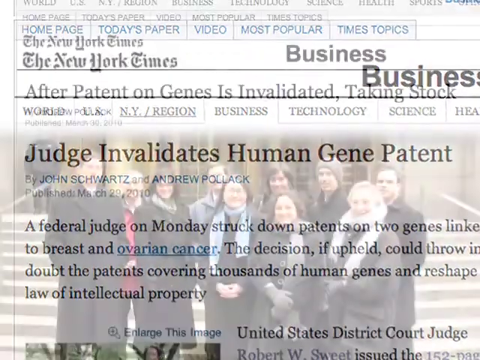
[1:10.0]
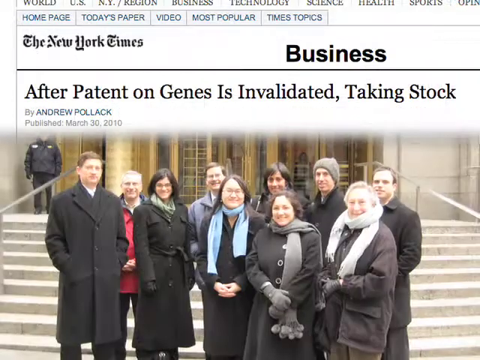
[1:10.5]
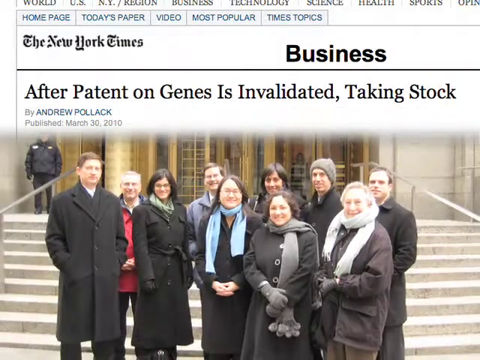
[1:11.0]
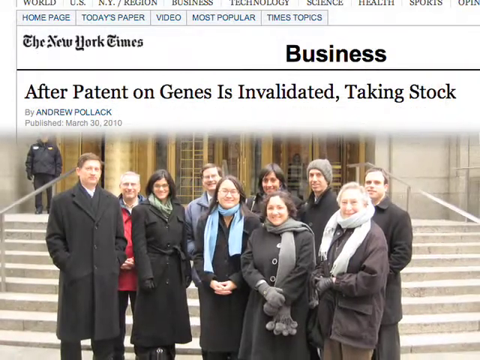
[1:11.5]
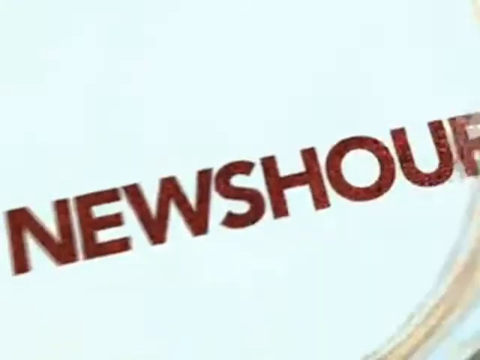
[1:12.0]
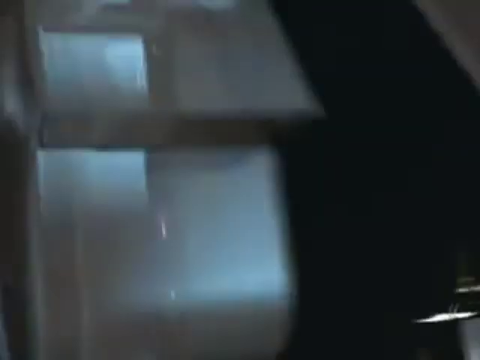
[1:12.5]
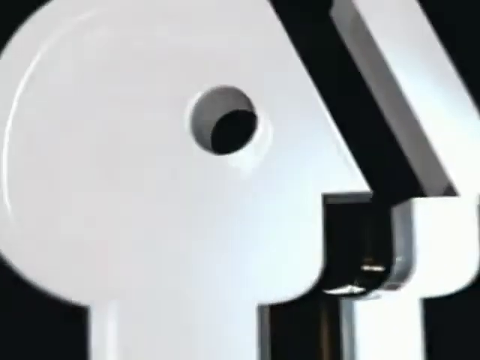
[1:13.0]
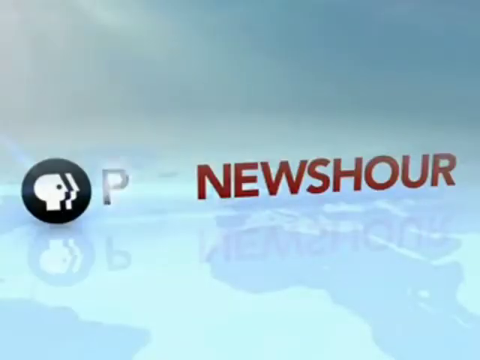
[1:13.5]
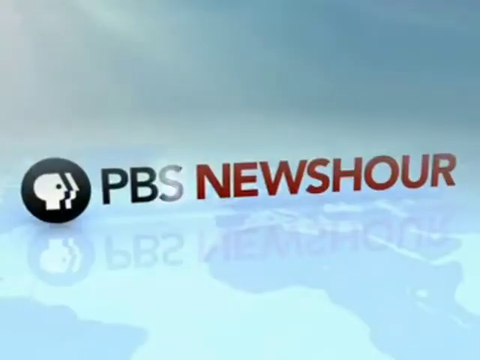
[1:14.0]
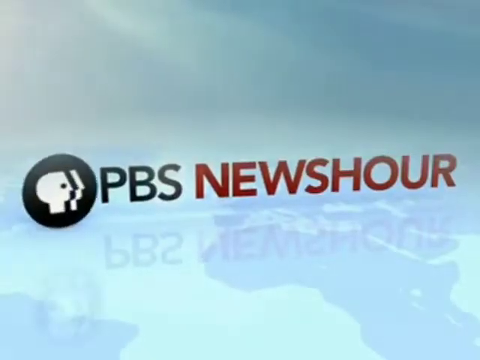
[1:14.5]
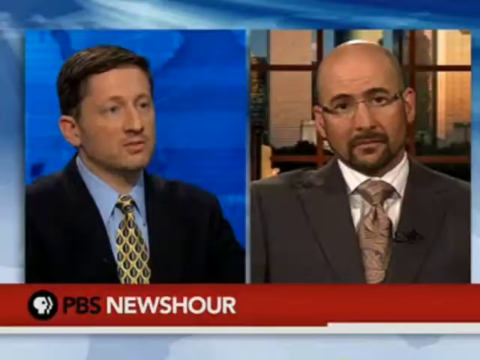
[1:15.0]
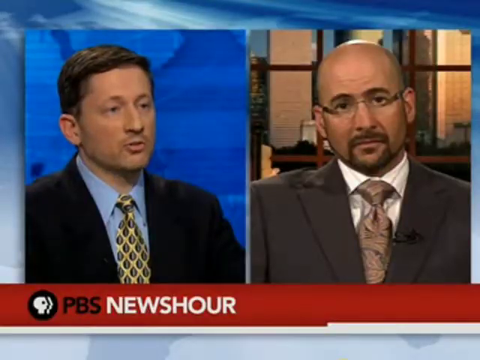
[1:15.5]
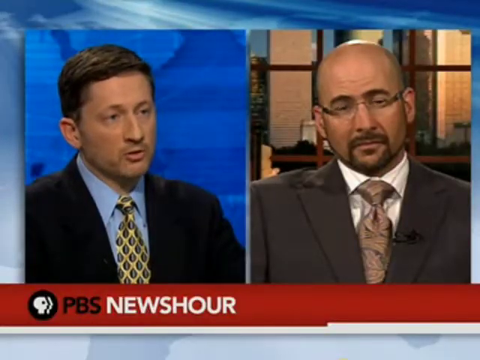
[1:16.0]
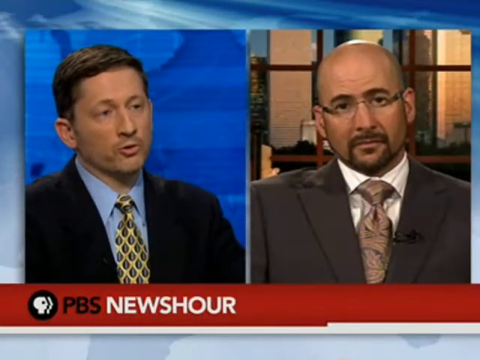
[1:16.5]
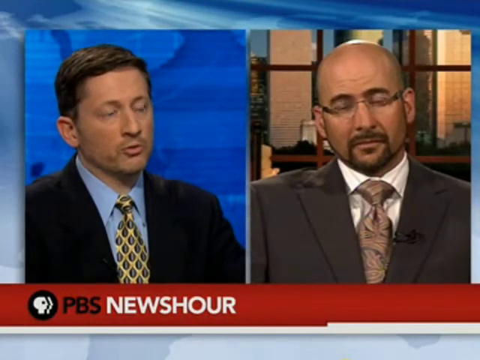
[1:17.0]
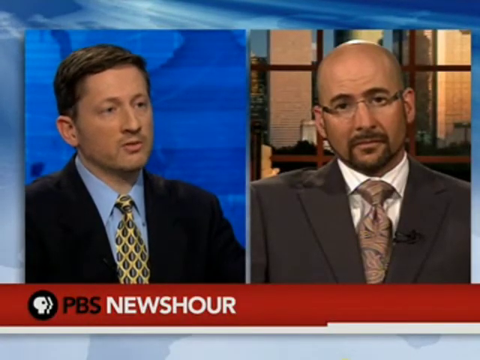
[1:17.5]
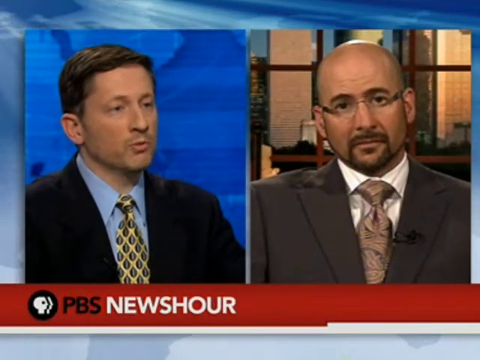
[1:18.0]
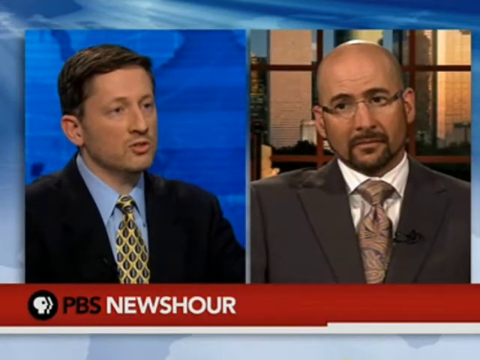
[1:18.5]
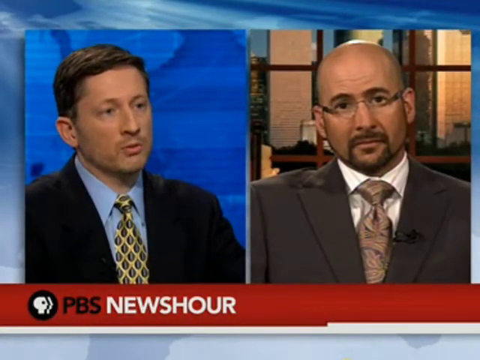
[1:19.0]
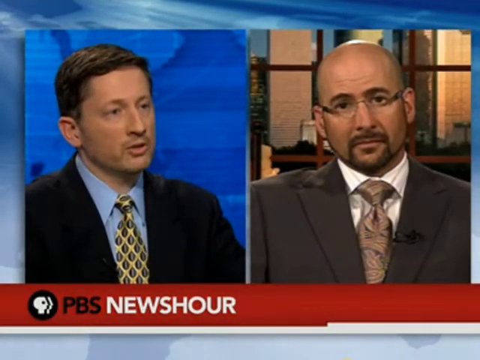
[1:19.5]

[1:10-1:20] A website is shown that looks to be the New York Times, as indicated in the upper left in its usual font in black letters. Above that is the site's navigation, and to the lower right of it, in bigger black letters, is the word "business." Below that on the left is the article title: "after patent on genes is invalidated taking stock." Below the title is a picture of maybe about 12 different people standing on a stairway. The video then cuts to a black screen, and the PBS logo rolls in: basically a face looking to the right, with an outline to the right doubling the right inch or so of the face, all on black. The logo then becomes very small and moves to the center left; after it, "PBS" appears in capital black letters, followed by "News Hour" in dark red capital letters.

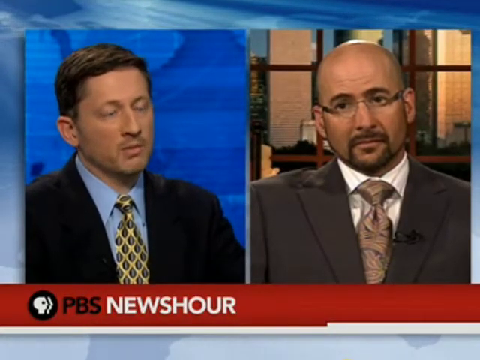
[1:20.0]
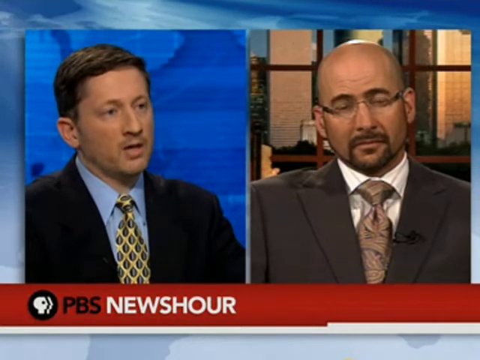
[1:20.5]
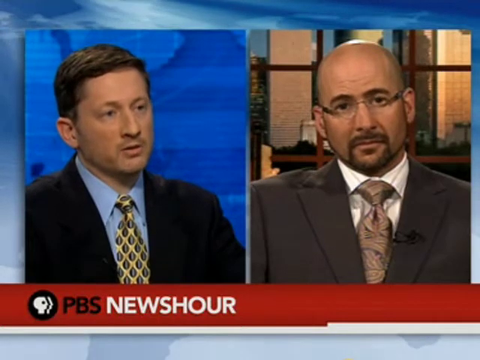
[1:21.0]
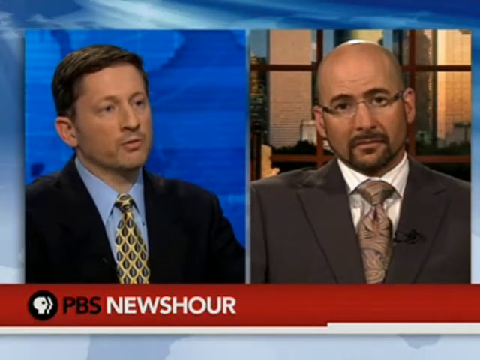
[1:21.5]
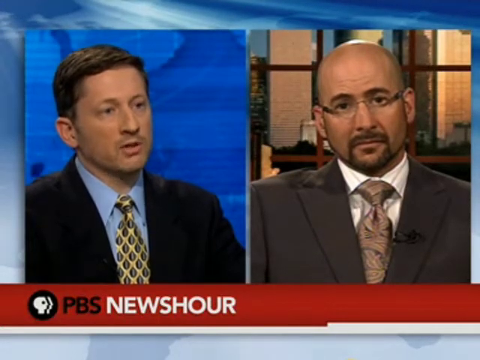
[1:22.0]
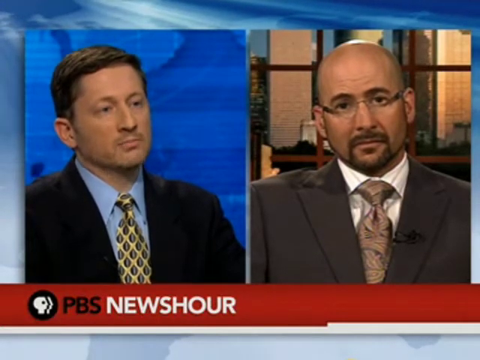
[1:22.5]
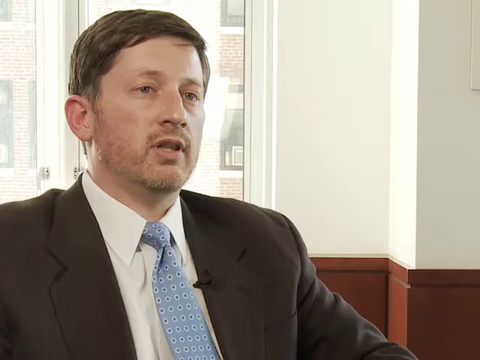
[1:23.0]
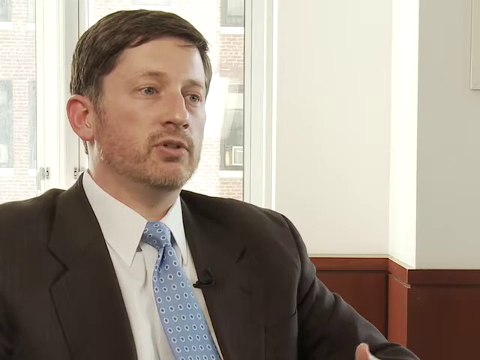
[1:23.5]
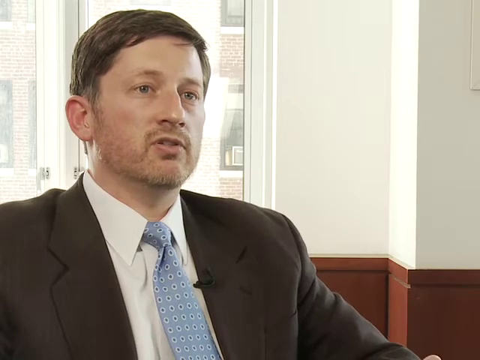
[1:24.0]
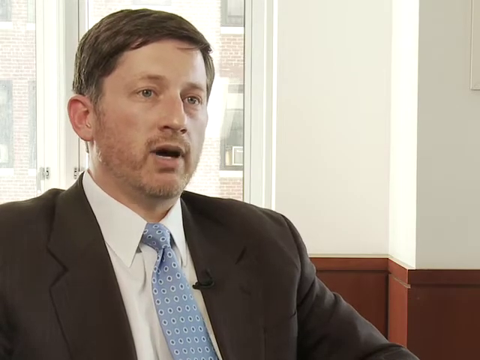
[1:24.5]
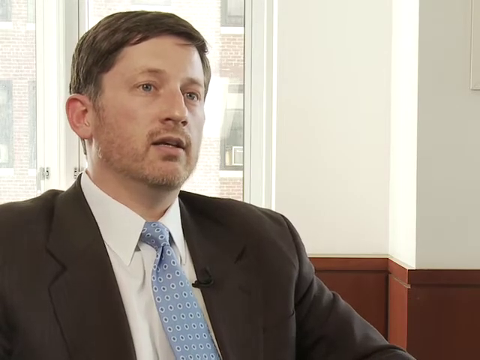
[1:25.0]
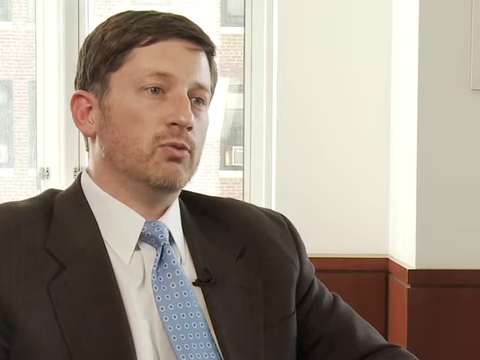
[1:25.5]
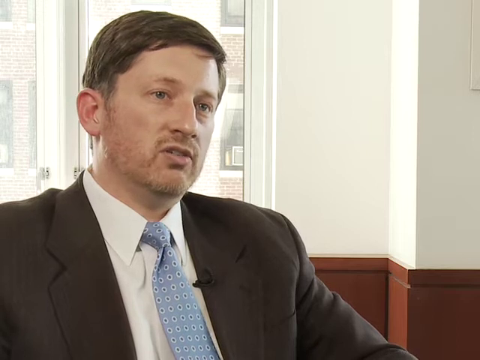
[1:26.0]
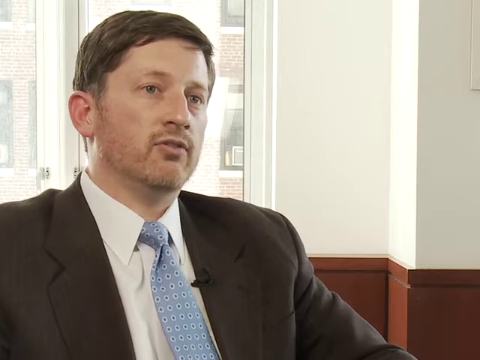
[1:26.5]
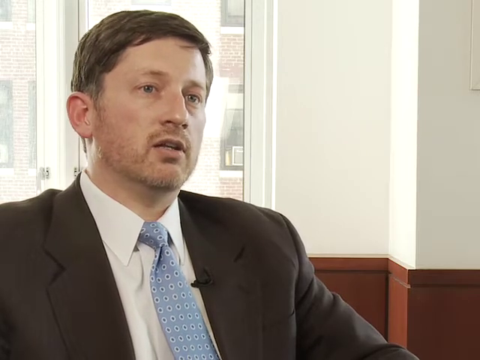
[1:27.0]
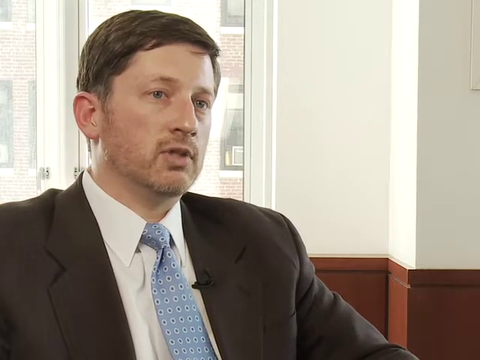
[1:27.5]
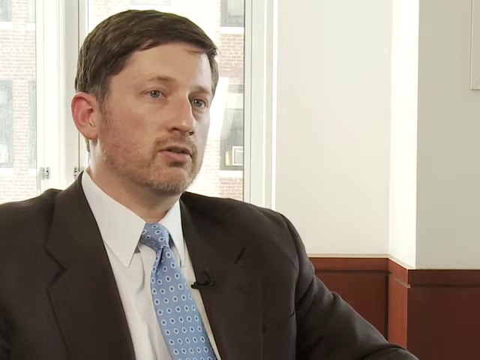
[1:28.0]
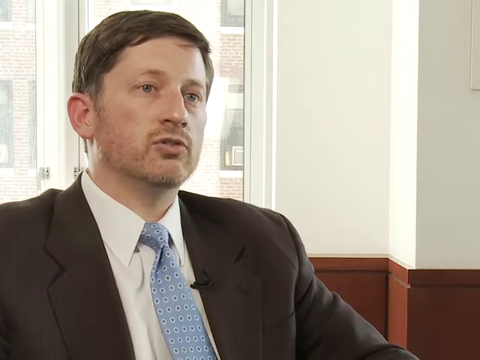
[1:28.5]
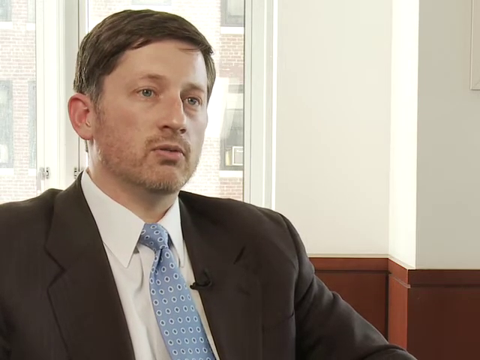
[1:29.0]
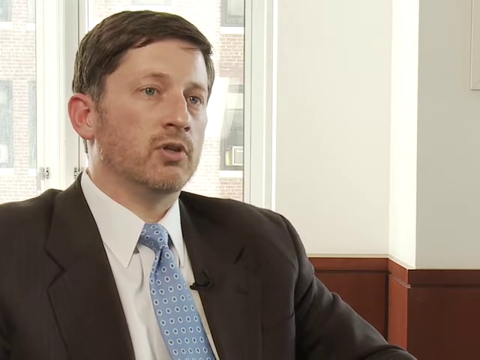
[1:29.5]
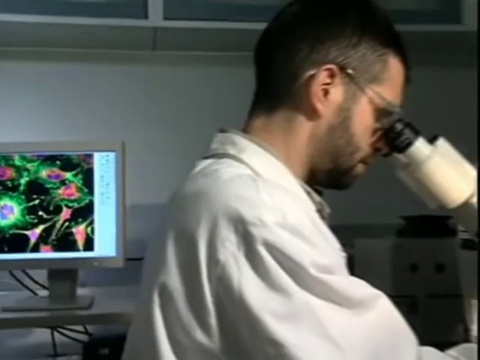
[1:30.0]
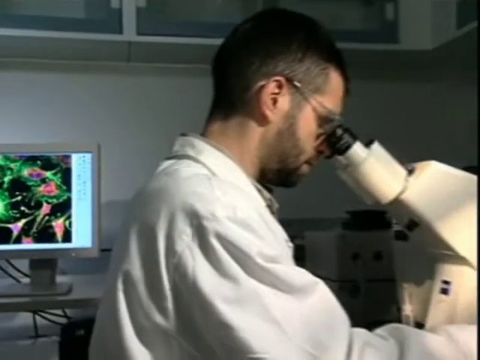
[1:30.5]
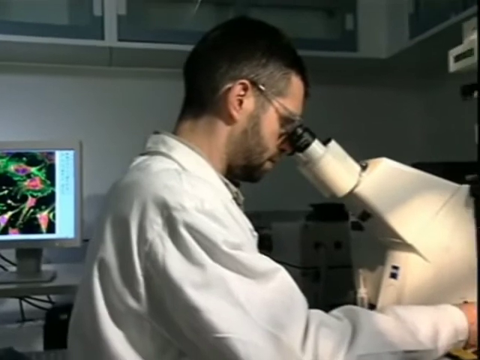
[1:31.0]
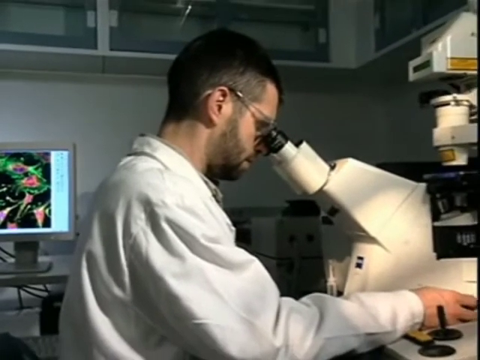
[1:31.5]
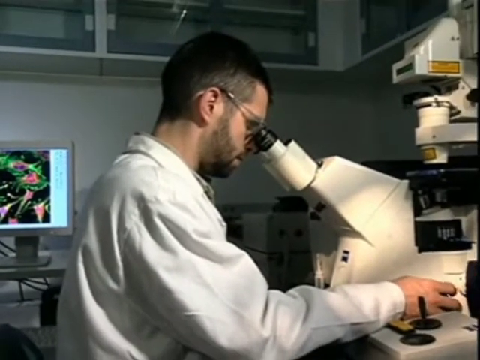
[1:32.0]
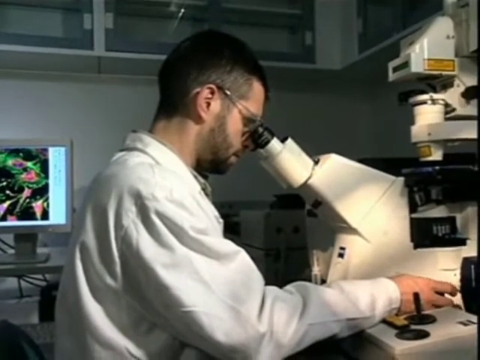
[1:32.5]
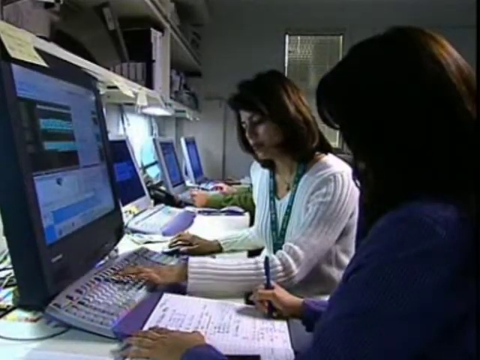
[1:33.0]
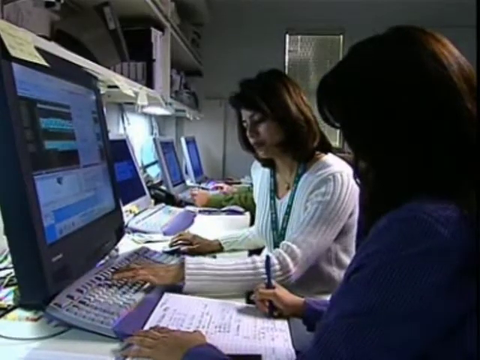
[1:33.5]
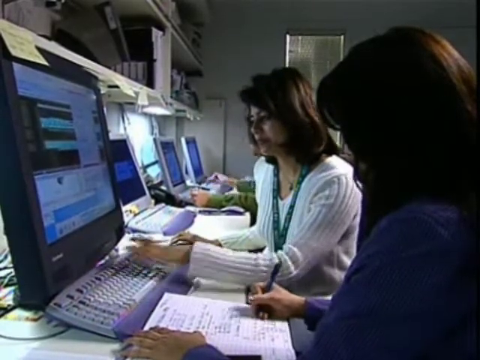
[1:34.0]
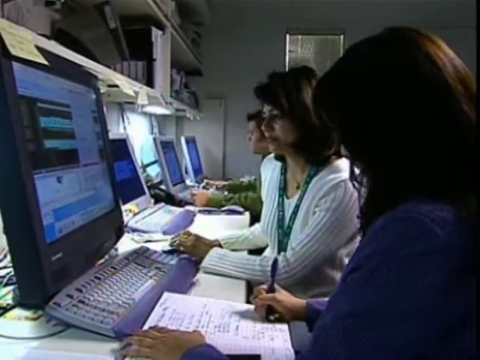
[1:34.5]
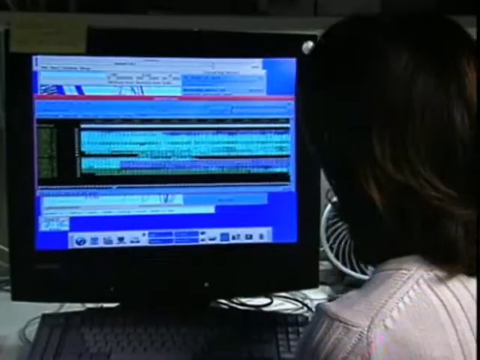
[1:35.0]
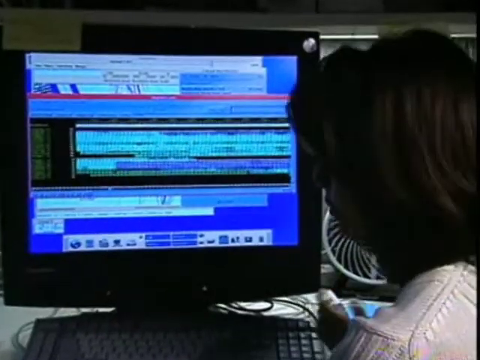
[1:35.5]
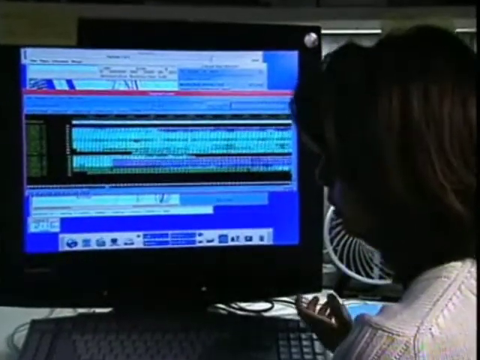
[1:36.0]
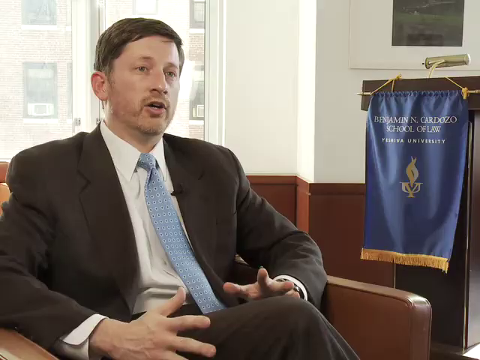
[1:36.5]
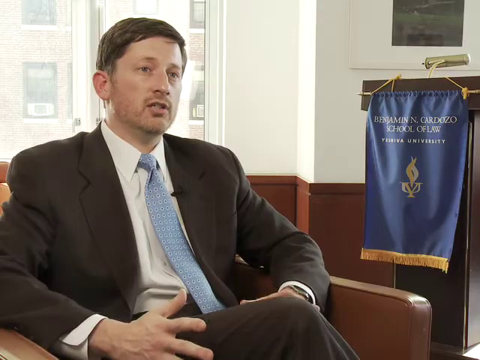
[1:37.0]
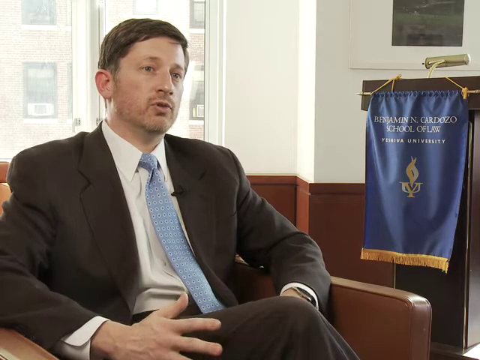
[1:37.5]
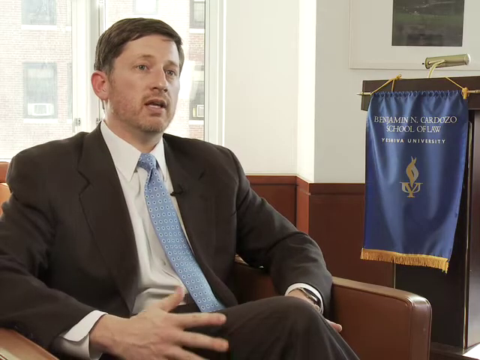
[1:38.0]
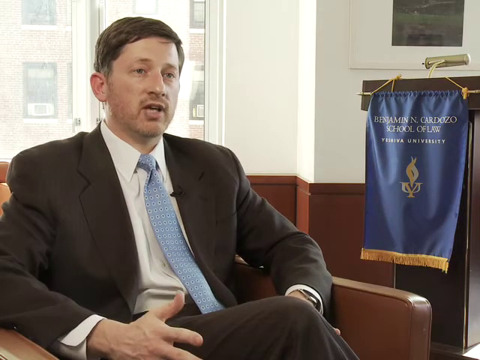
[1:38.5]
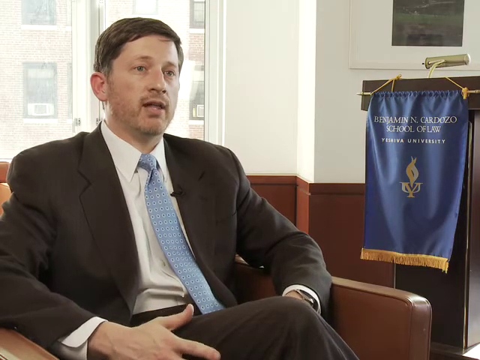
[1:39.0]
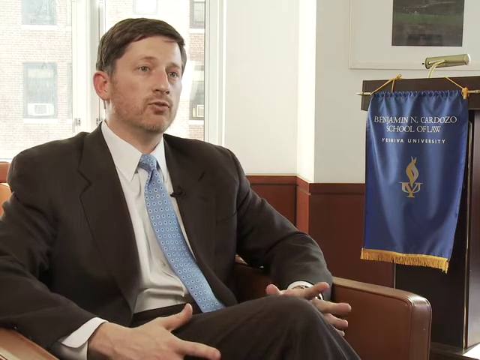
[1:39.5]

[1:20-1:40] The frame is divided into left and right halves. Along the bottom runs a dark red banner from left to right with the PBS logo, "PBS" in capital black letters after it, and then "News Hour" in capital white letters. On the left is a white man, probably around 40 or so, with a five o'clock shadow, a black suit coat, a yellow tie with black diamonds and a light blue dress shirt. He is seen from the middle of his chest up, faces somewhere around maybe five o'clock, and is speaking. The man on the right is a little older, probably in his 50s, maybe 60; he wears a dark gray suit jacket, a brown tie and a white dress shirt, has a beard, is bald and wears thin glasses. He looks forward with a serious expression and does not really reply to what the man on the left is saying. The video then goes to a different shot of a man, probably around 40, with medium-length brown hair, a five o'clock shadow, a black suit coat and a light blue tie, facing somewhere around five o'clock and also talking as if in an interview.